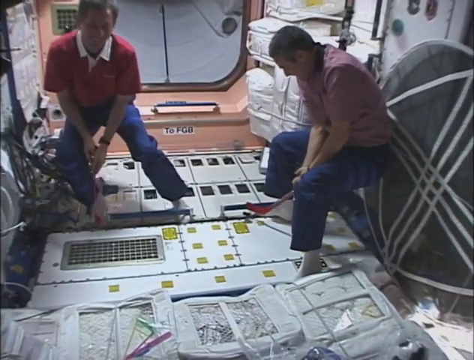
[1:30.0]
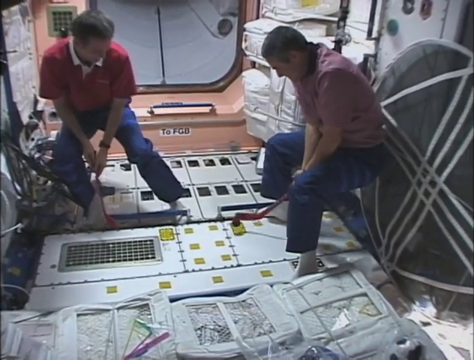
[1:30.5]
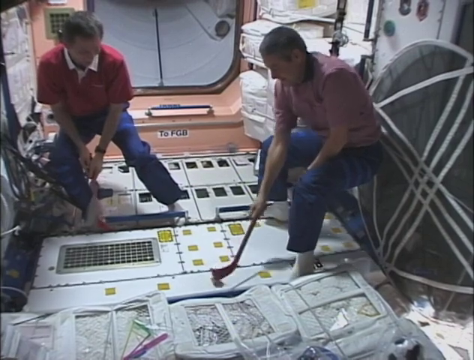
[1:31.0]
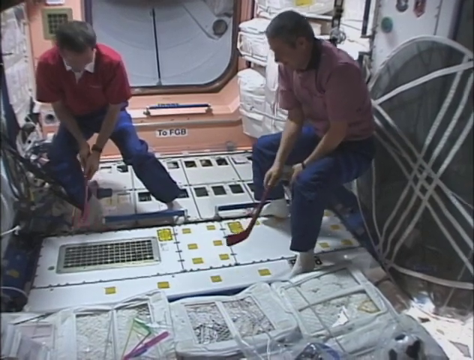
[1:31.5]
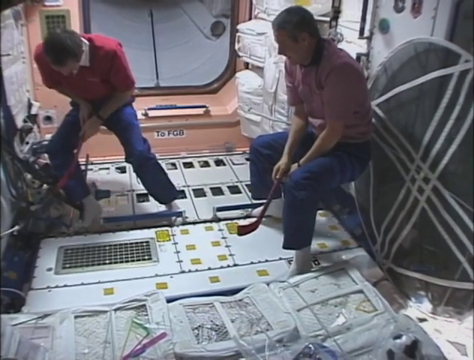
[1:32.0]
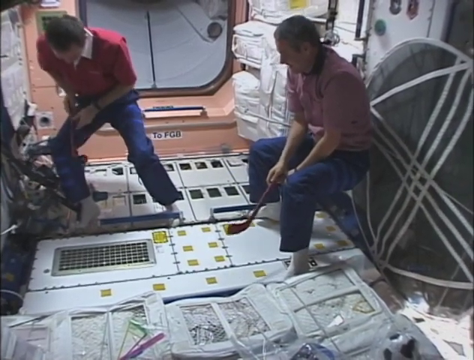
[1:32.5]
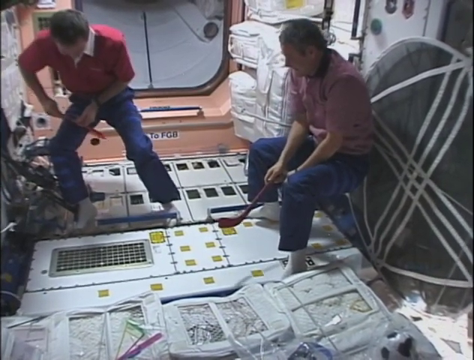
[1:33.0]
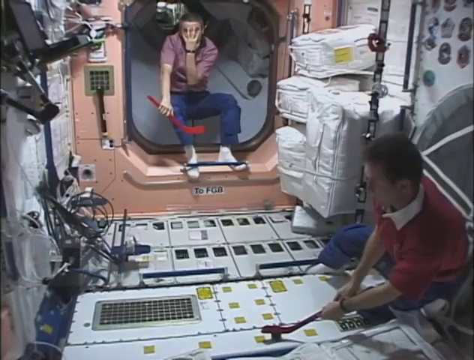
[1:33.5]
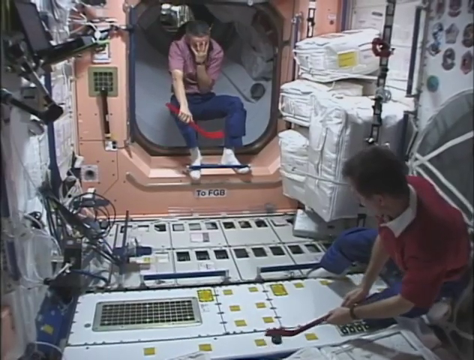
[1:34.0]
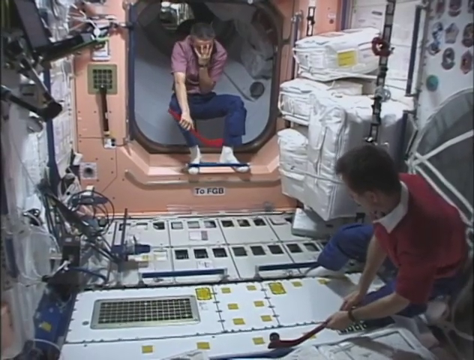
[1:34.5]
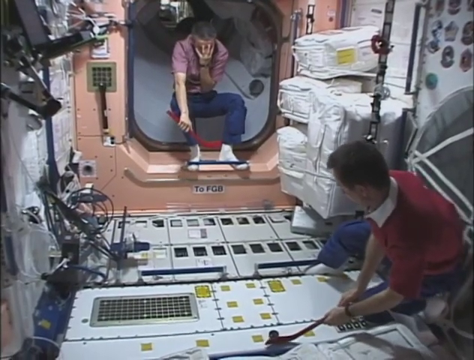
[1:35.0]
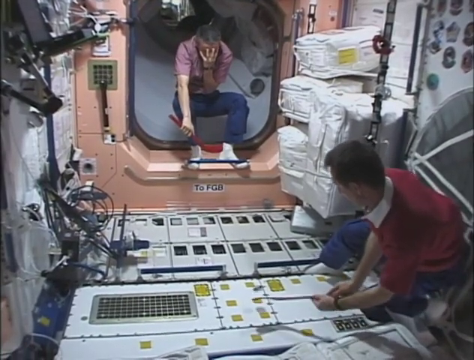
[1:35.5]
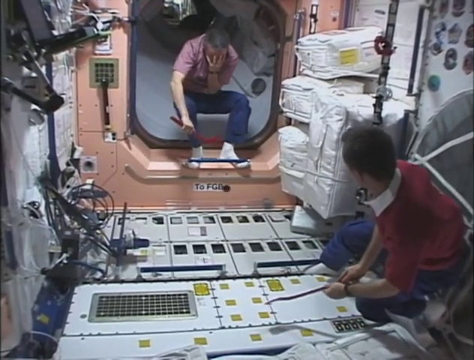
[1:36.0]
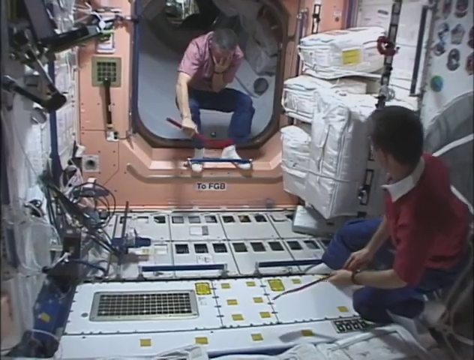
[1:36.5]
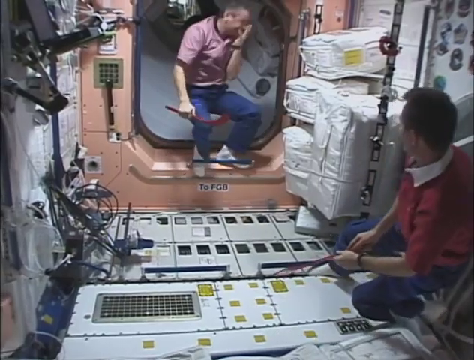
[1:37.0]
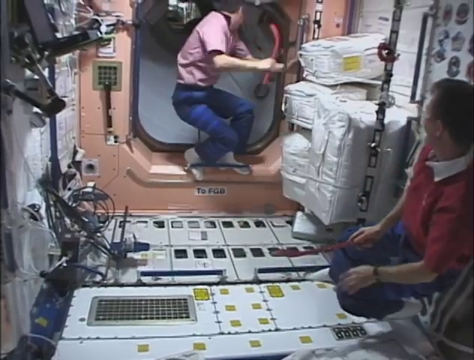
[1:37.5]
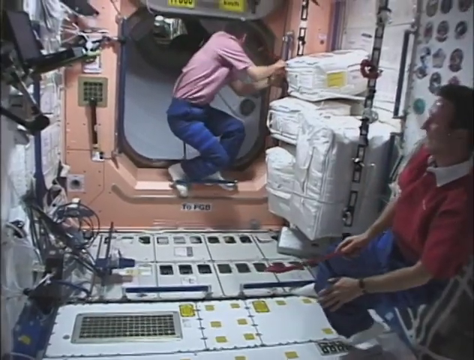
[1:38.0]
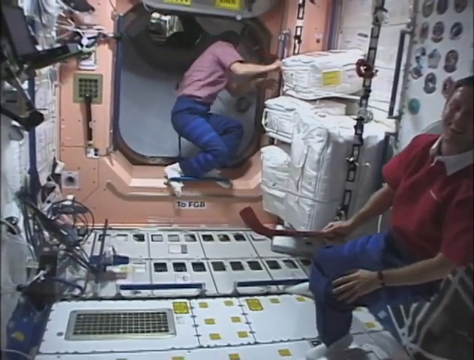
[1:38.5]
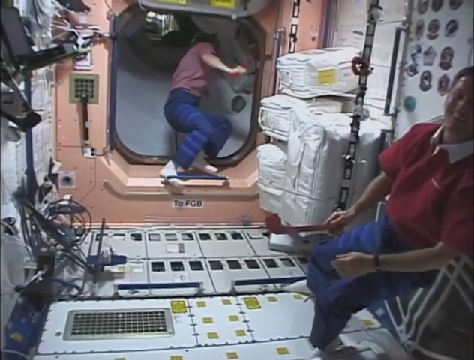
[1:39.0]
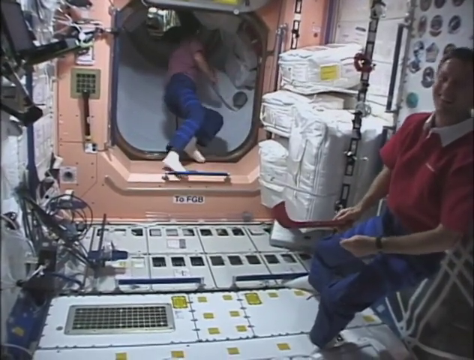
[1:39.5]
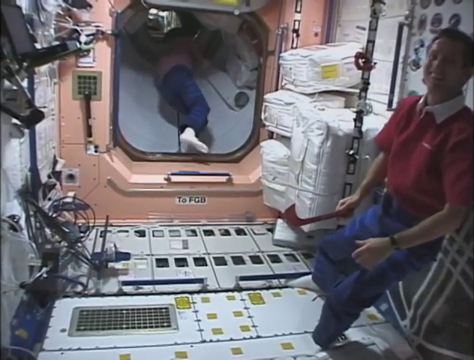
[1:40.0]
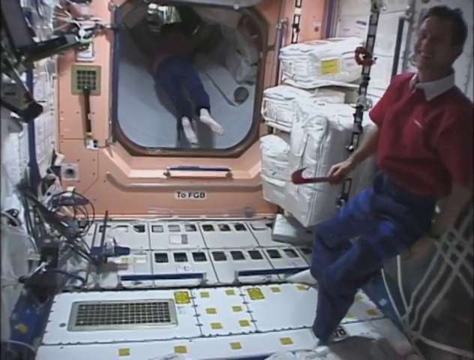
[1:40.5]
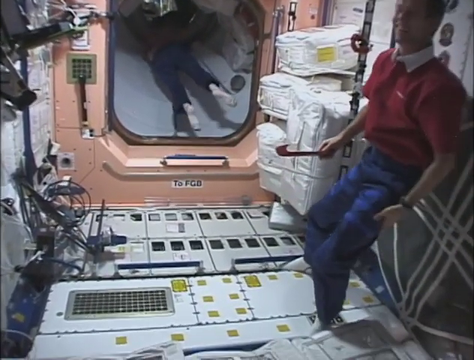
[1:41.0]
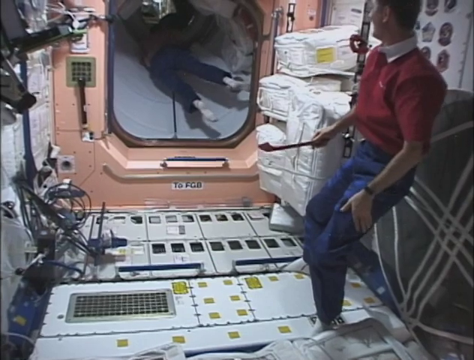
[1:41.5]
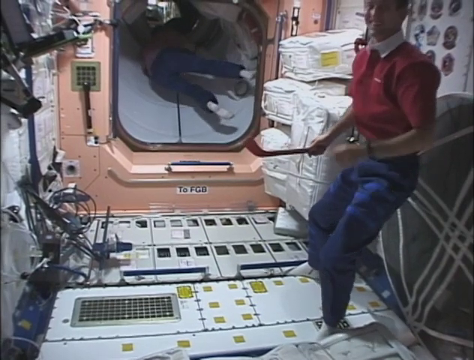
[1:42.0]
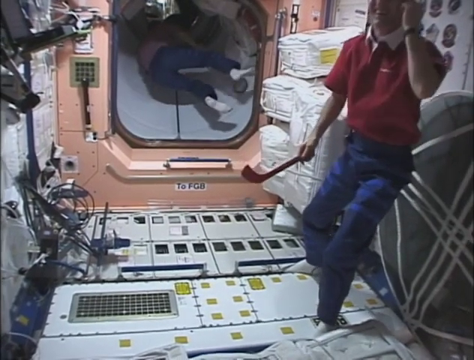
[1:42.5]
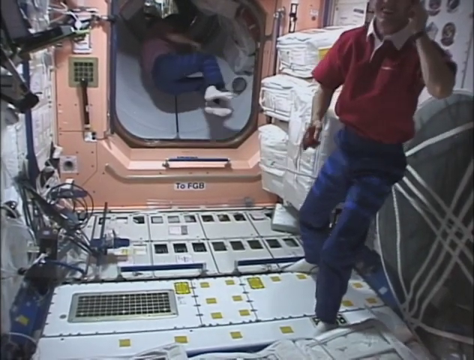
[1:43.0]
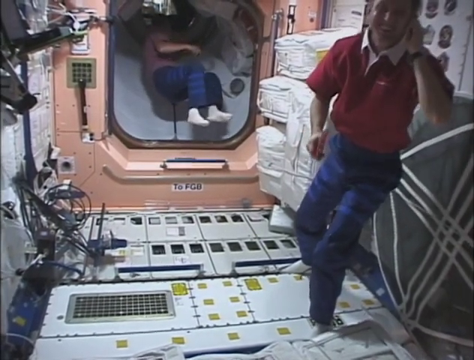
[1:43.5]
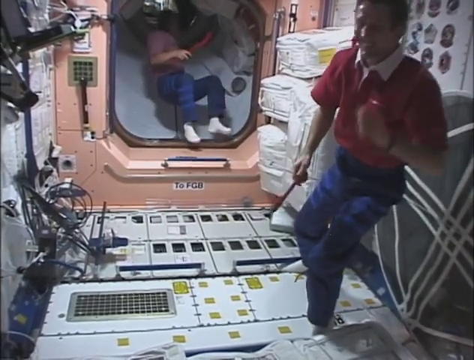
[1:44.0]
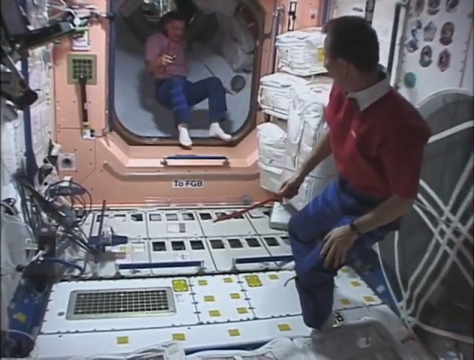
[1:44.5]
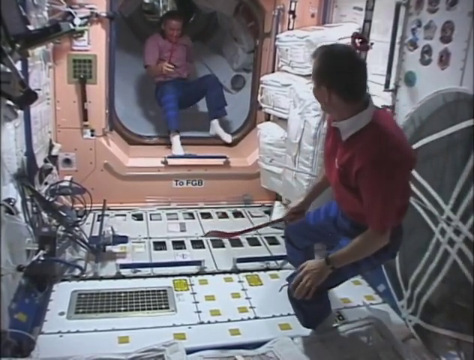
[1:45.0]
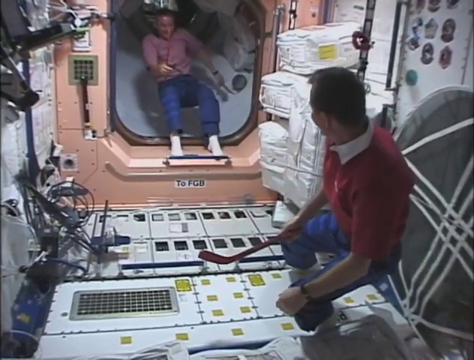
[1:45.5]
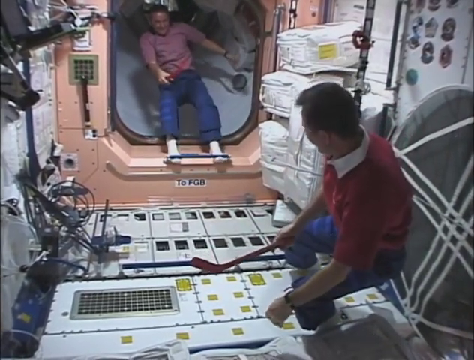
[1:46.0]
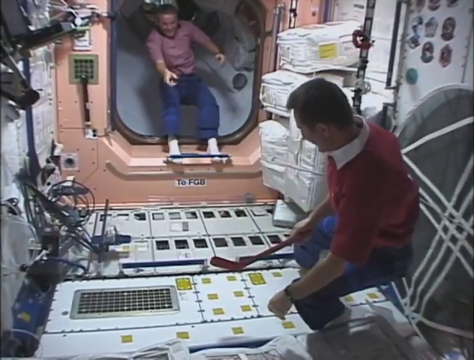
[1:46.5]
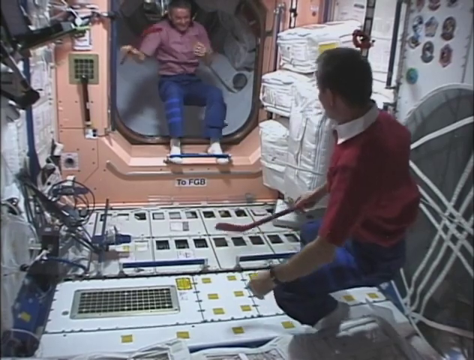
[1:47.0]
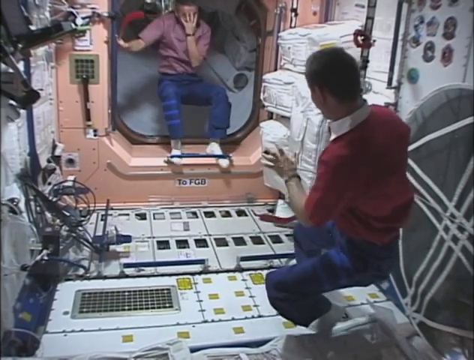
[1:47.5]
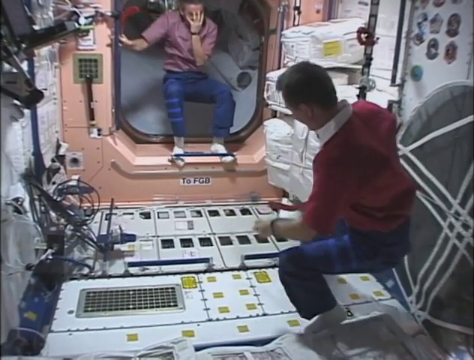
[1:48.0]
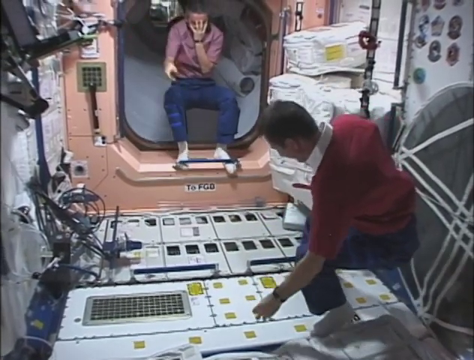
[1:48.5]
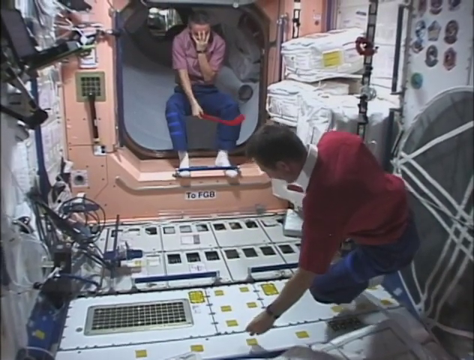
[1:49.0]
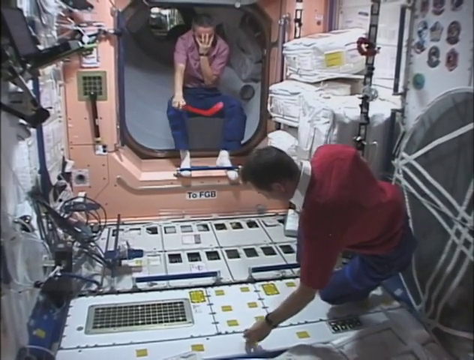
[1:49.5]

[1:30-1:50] The puck is to the left of the man on the right, who holds his stick right next to it, while the man on the left stands ready to hit the puck. The puck is batted up and over. In the next shot, the man on the right hits the puck while the man on the left is inside an area with an open round section, his face covered by his left hand, apparently afraid of being hit by the puck. He slides through a tube area to go after the puck, picks it up with his right hand, and dives backwards to catch the puck as it slides through the open area, continuing to keep his left hand over his face.